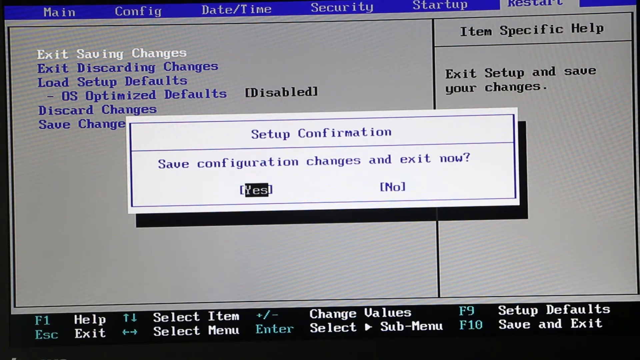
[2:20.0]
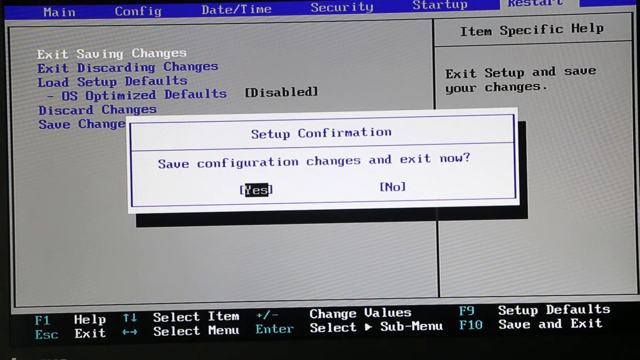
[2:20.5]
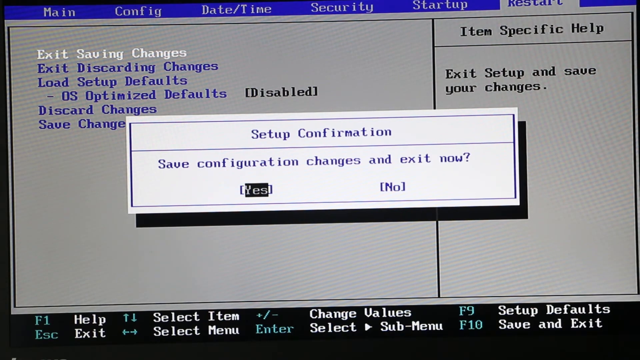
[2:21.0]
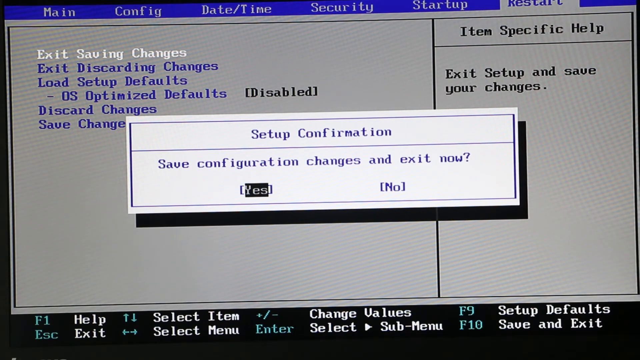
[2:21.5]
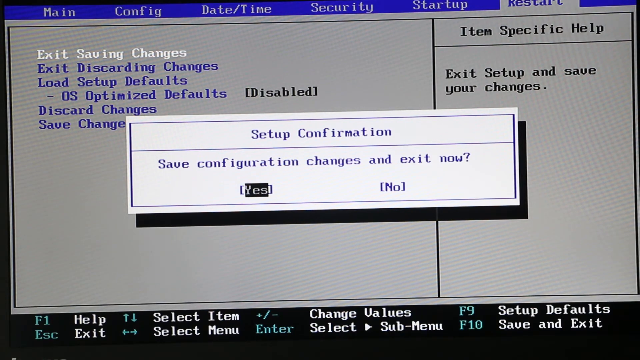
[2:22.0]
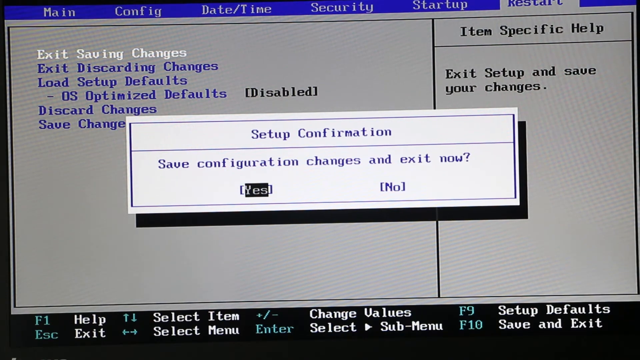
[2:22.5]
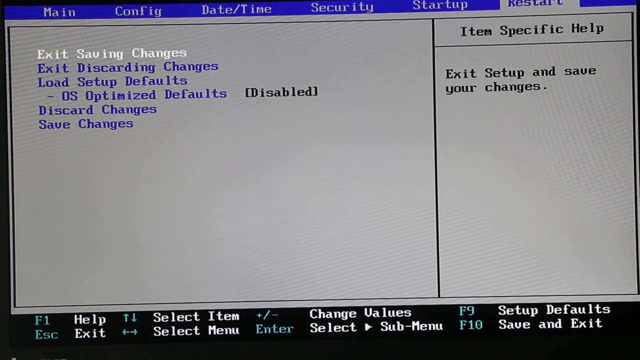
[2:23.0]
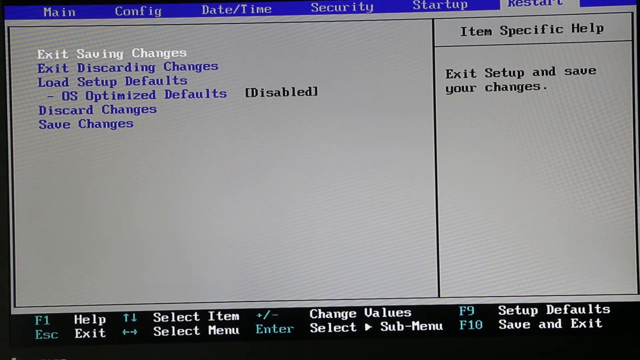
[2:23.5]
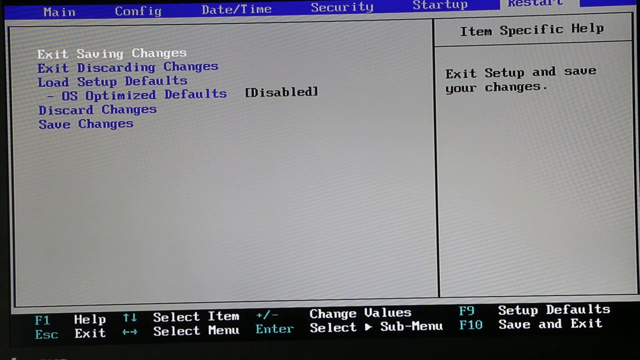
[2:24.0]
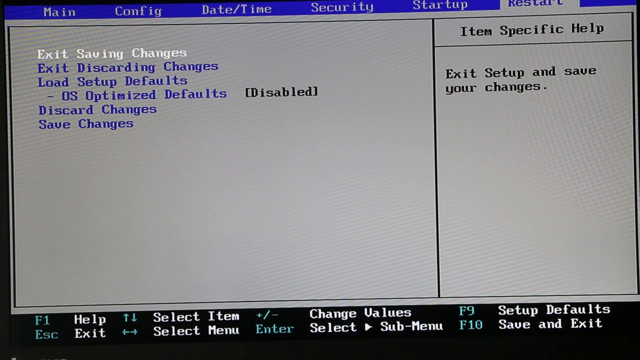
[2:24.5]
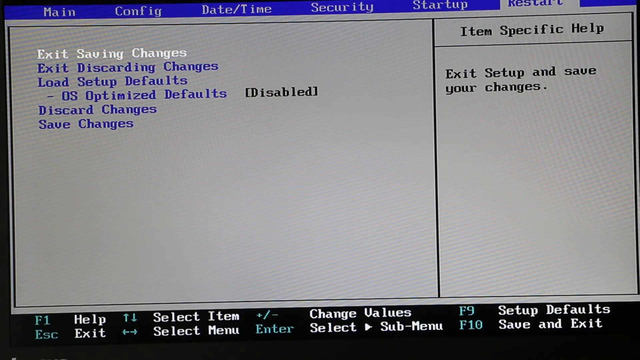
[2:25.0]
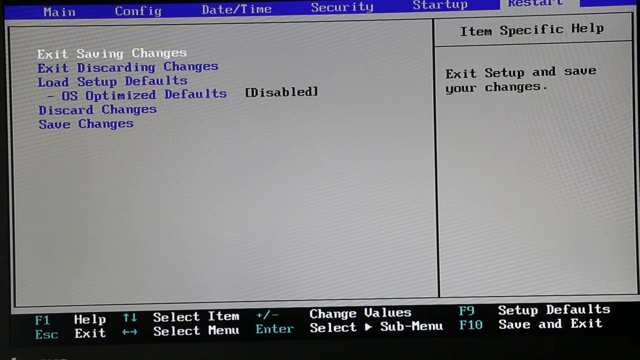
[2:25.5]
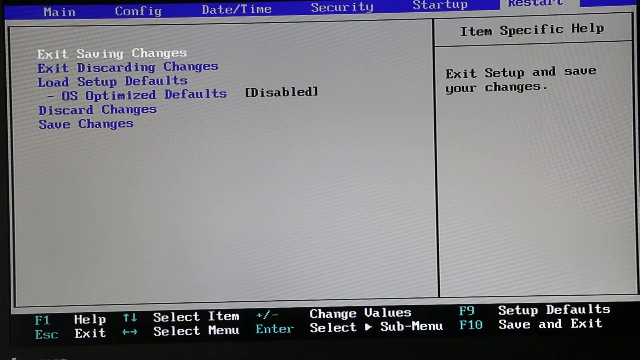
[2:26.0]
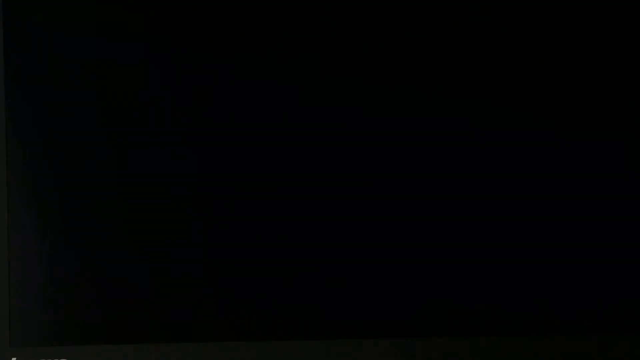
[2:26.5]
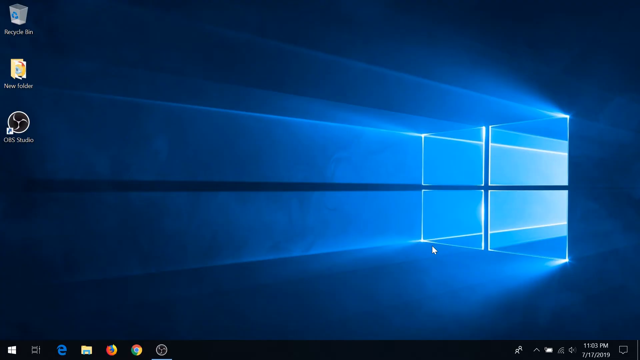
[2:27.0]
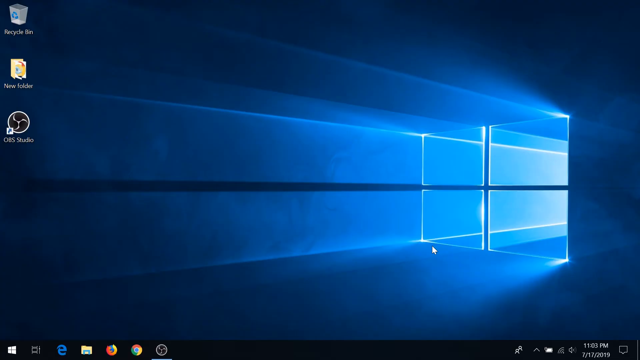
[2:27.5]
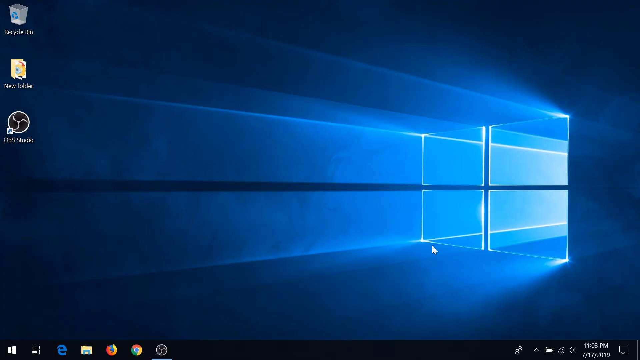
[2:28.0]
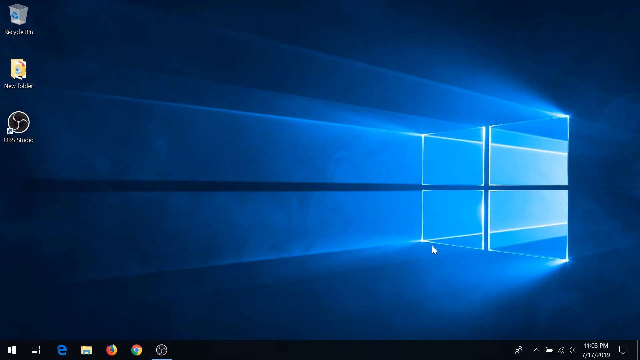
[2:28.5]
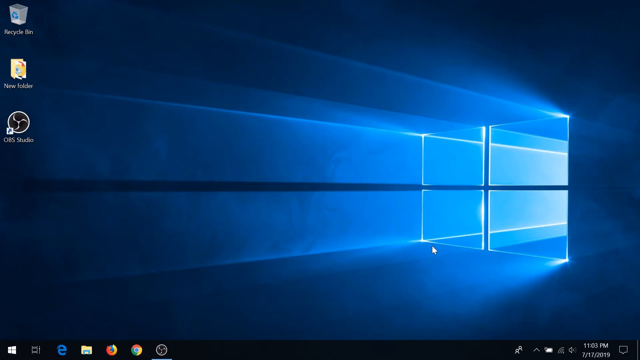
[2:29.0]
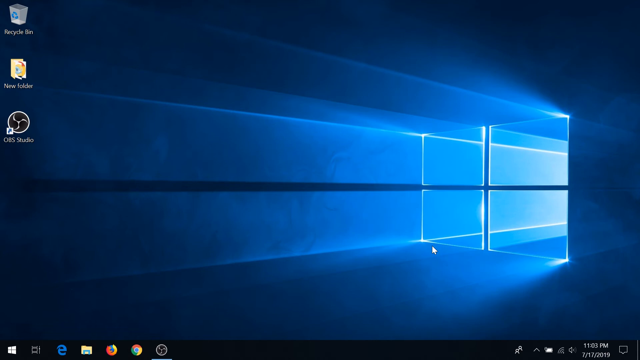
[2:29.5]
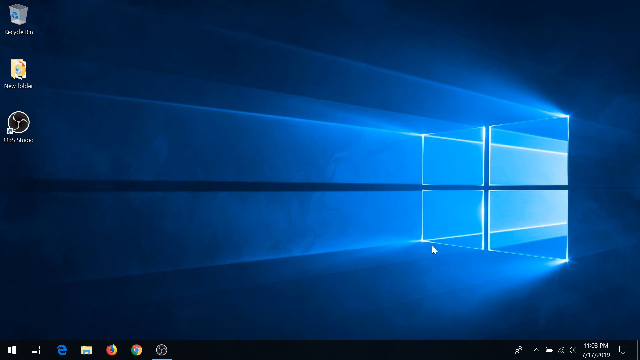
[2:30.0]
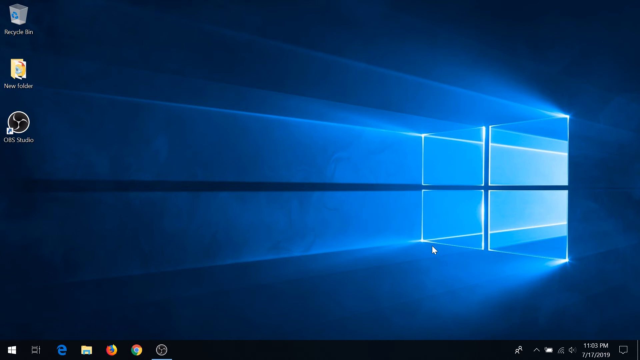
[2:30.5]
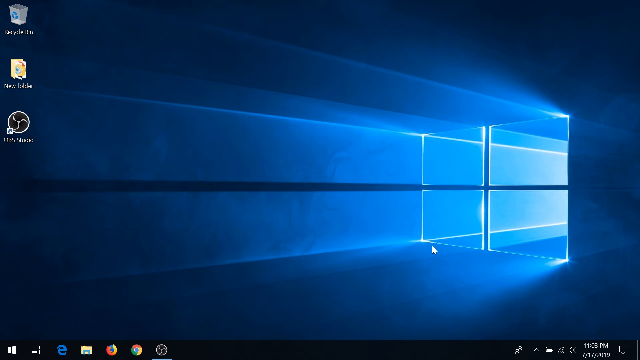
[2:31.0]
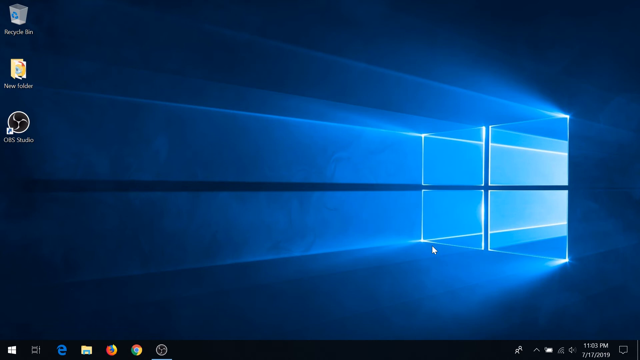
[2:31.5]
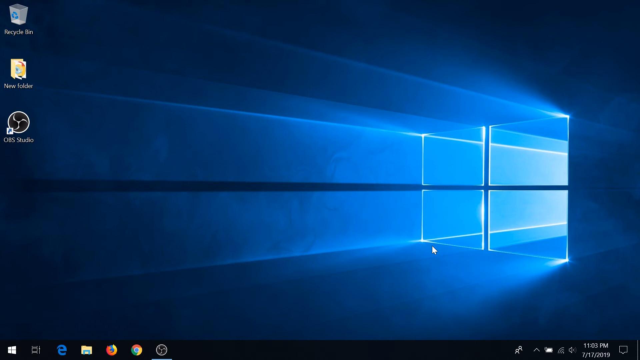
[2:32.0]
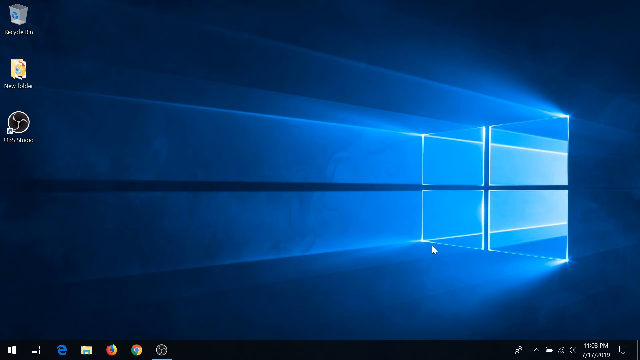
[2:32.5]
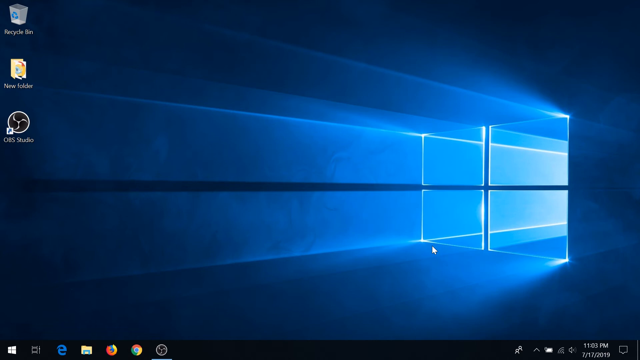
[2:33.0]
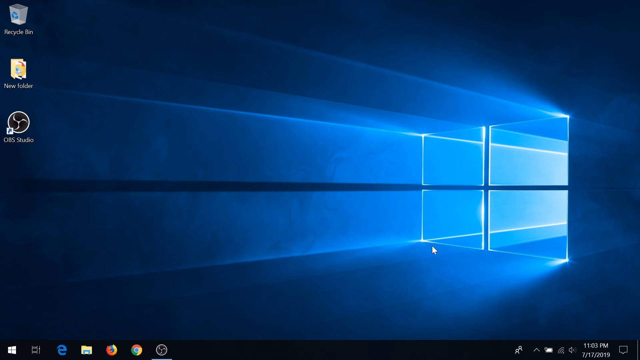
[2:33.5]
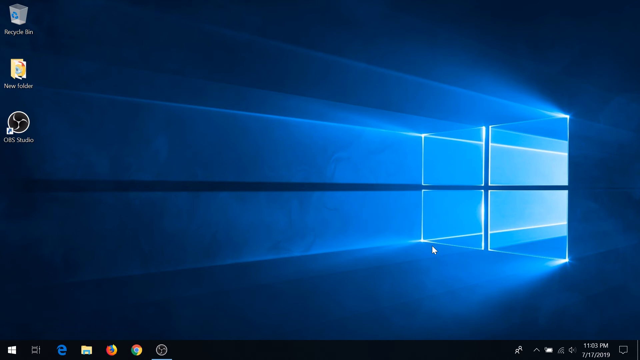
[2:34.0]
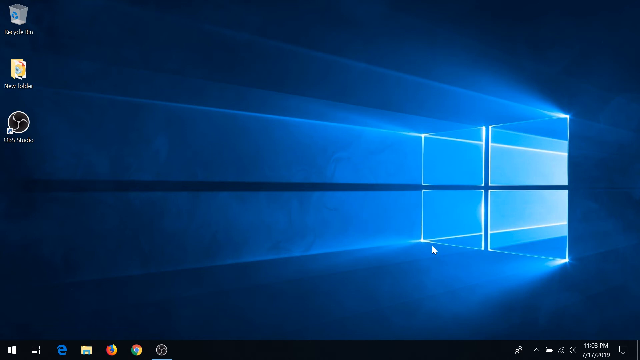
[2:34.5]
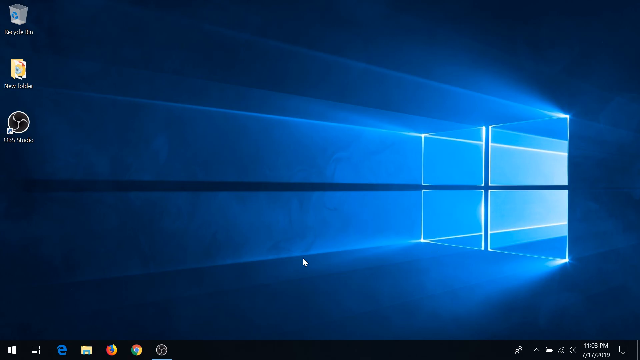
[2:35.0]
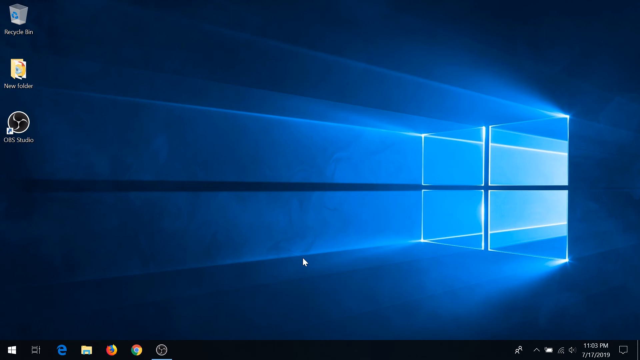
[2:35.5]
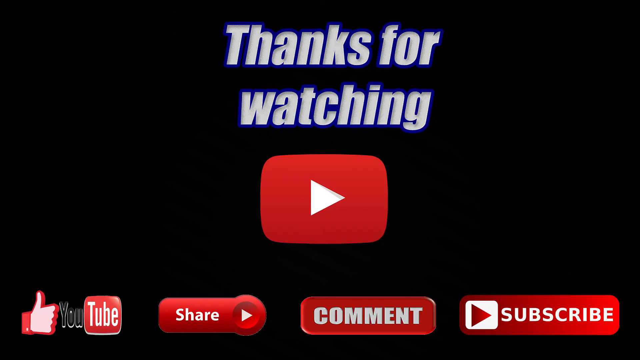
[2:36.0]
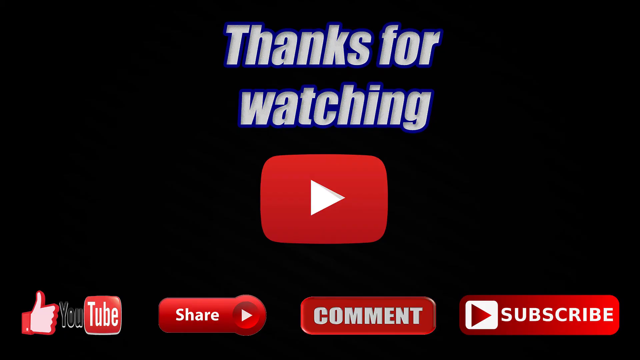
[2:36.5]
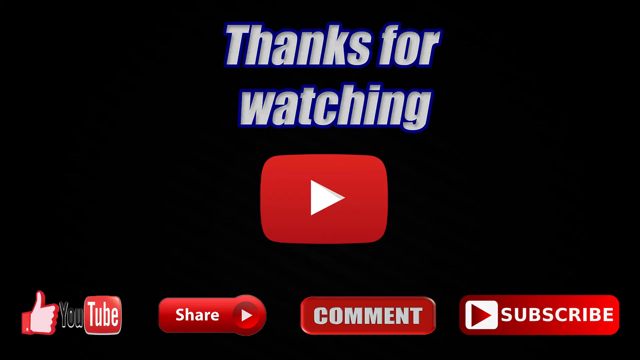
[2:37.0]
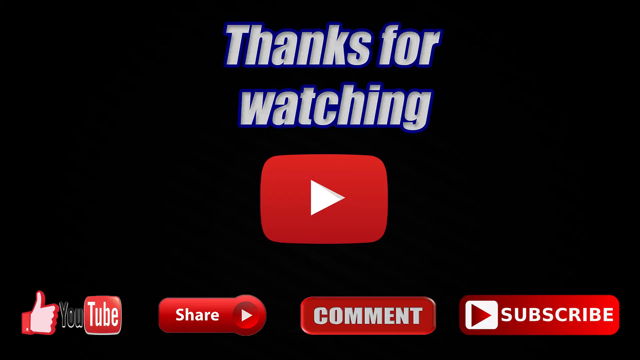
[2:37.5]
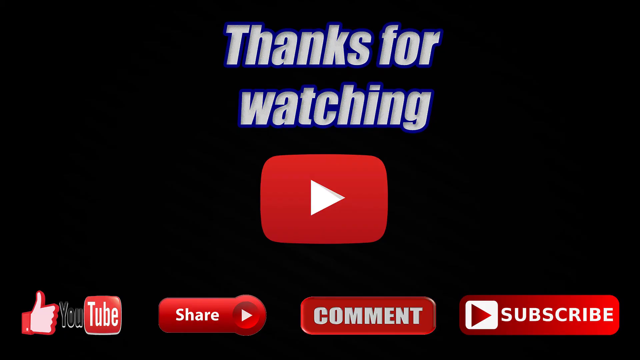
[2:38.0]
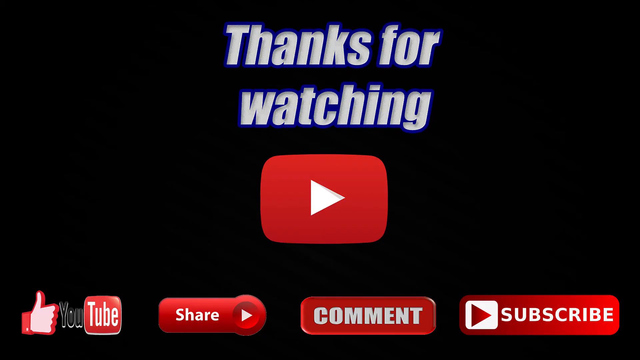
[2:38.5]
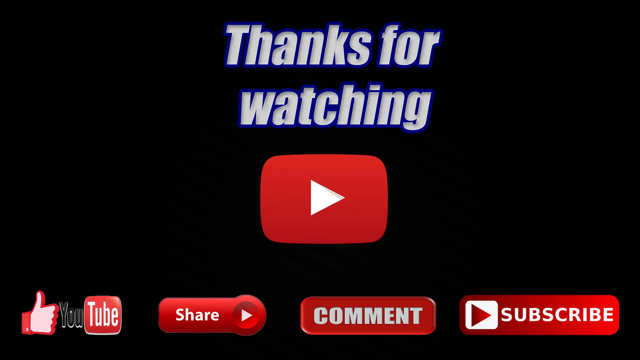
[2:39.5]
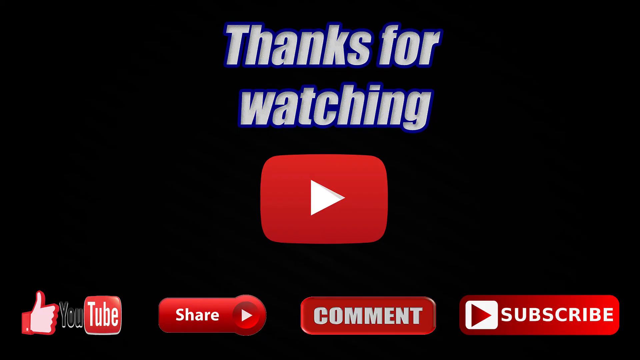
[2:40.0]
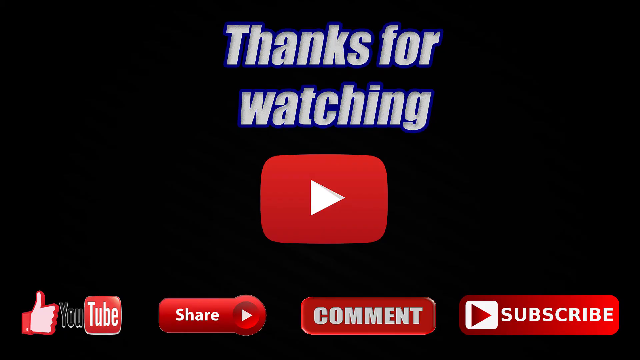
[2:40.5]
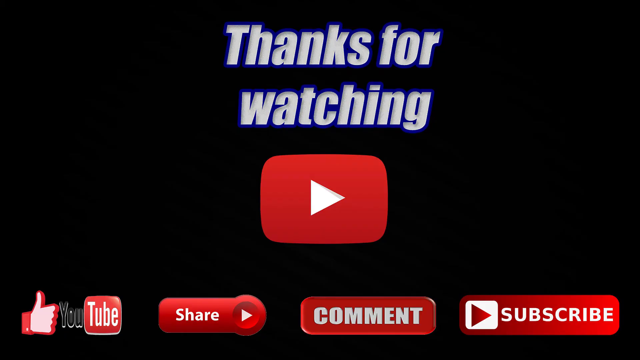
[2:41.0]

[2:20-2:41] The Restart menu of the setup is still shown, and it looks as though the user, with Yes highlighted, has selected the Yes option. After a short delay of a few seconds, the screen changes to the blue desktop seen earlier. The user's cursor is on the screen and appears to be stationary. The cursor then moves to the center of the screen before the screen goes black and a YouTube screen appears. It says "Thank you for watching" and shows a YouTube logo, a red screen with a white arrow pointing to the left, and along the bottom a thumbs-up icon, a share button, a comment button and a subscribe button. This appears to be a YouTube video, perhaps a help video on configuring the setup for network connections on a computer.